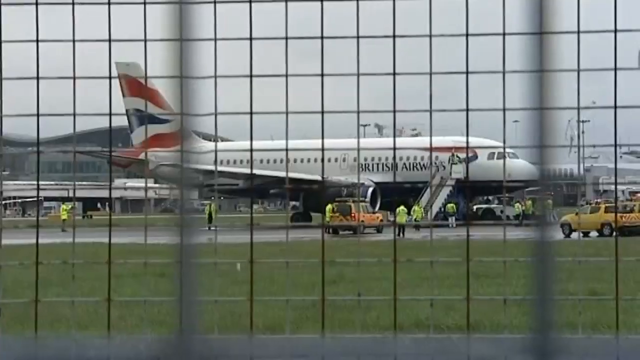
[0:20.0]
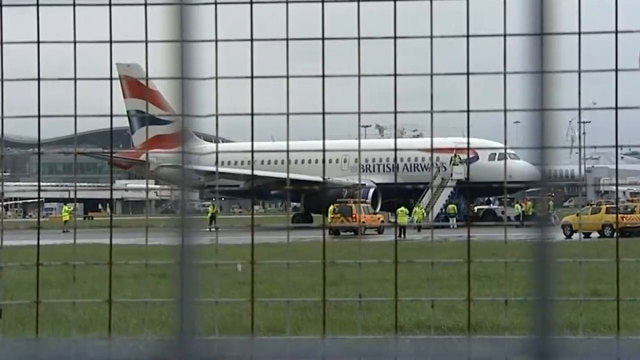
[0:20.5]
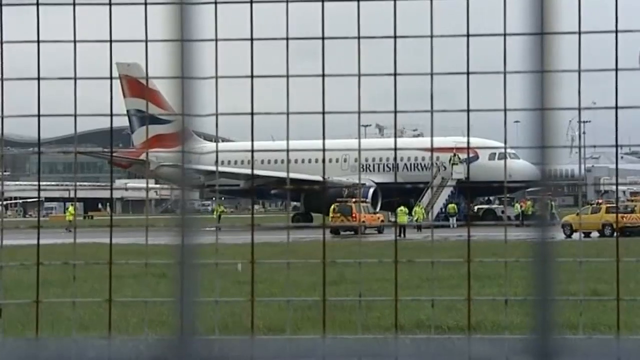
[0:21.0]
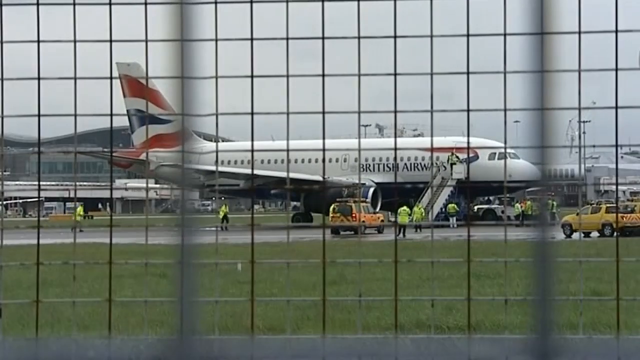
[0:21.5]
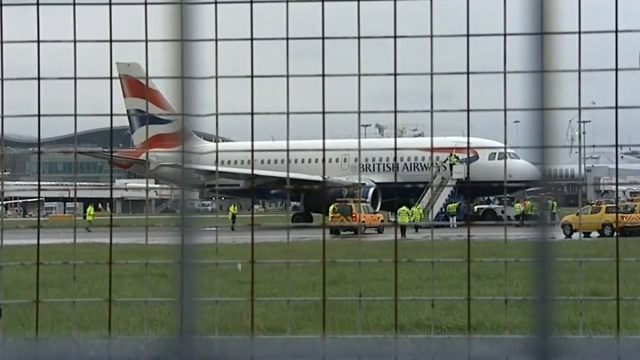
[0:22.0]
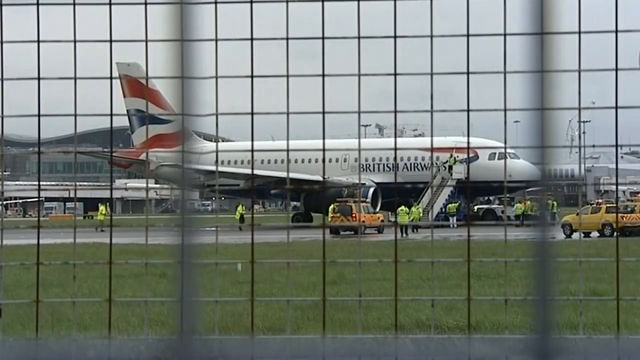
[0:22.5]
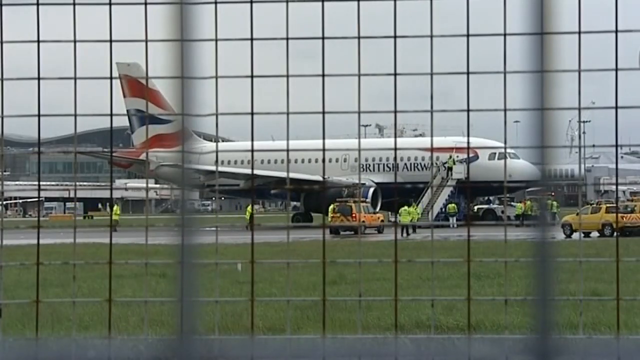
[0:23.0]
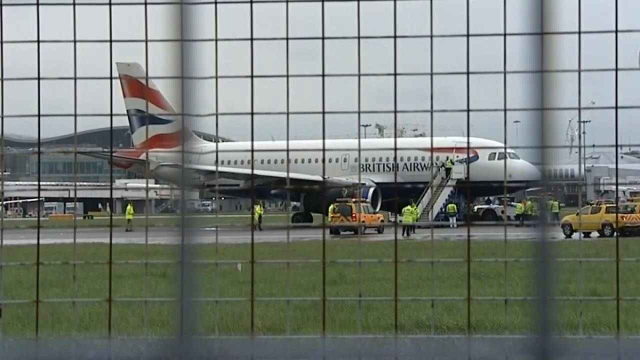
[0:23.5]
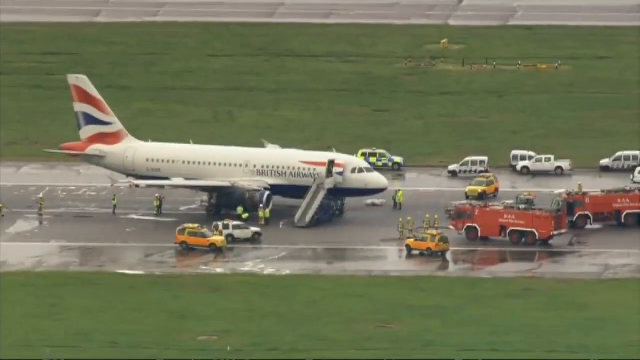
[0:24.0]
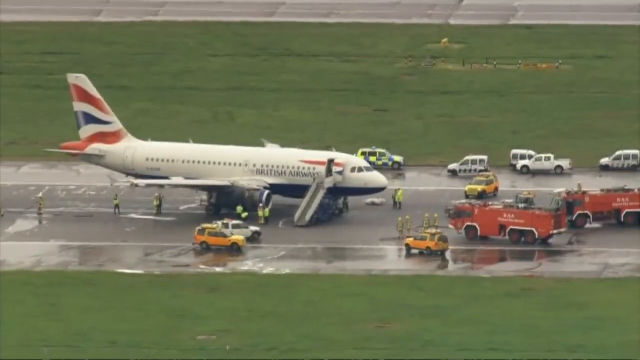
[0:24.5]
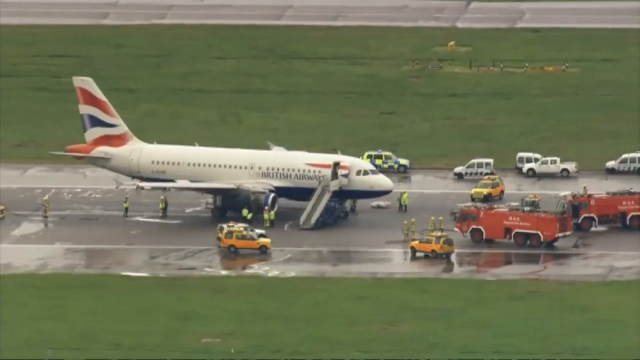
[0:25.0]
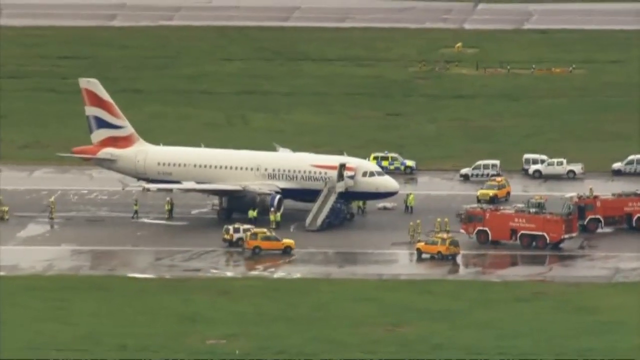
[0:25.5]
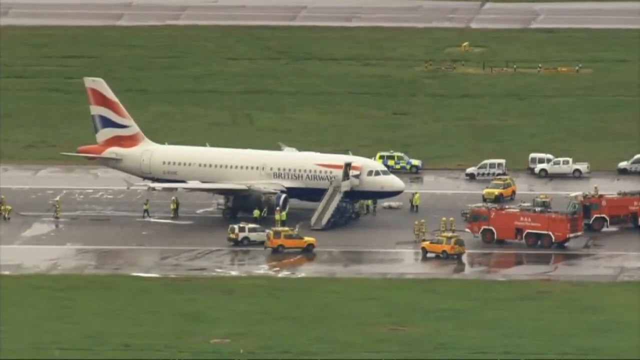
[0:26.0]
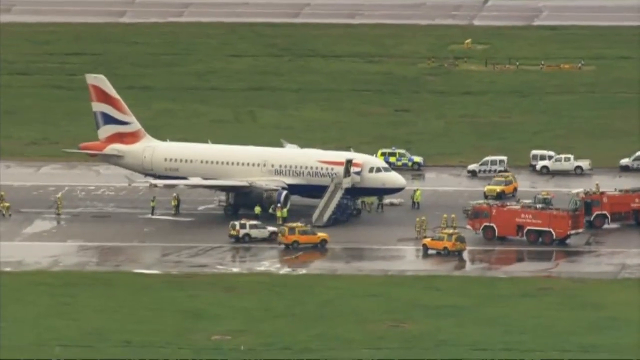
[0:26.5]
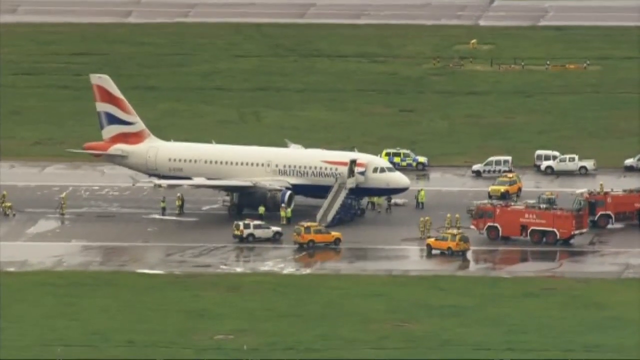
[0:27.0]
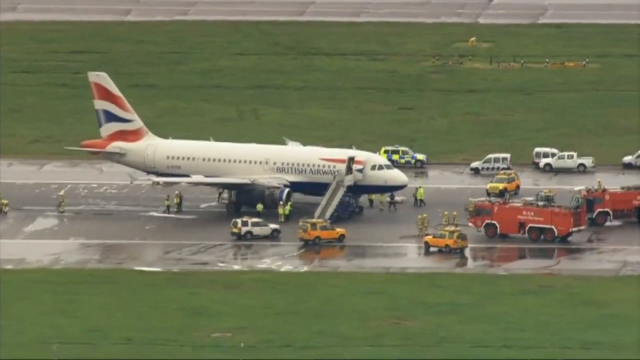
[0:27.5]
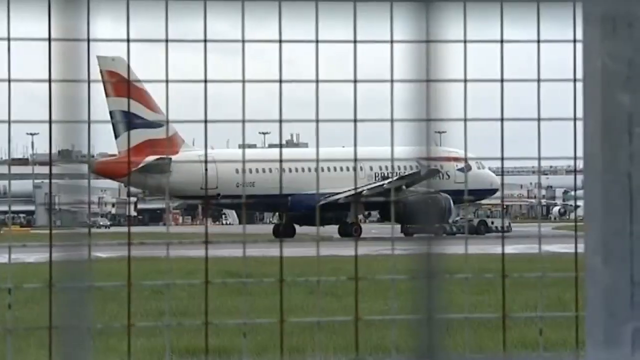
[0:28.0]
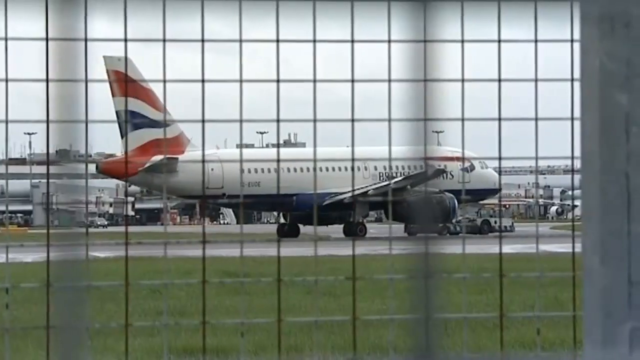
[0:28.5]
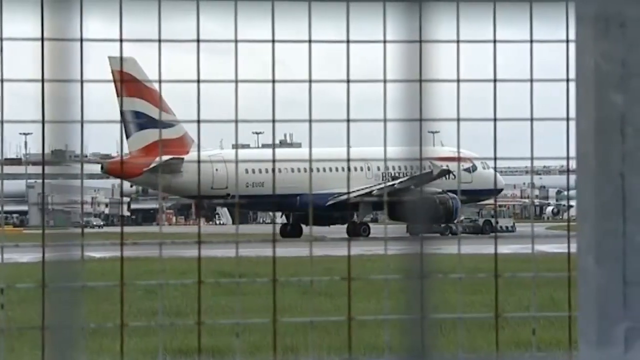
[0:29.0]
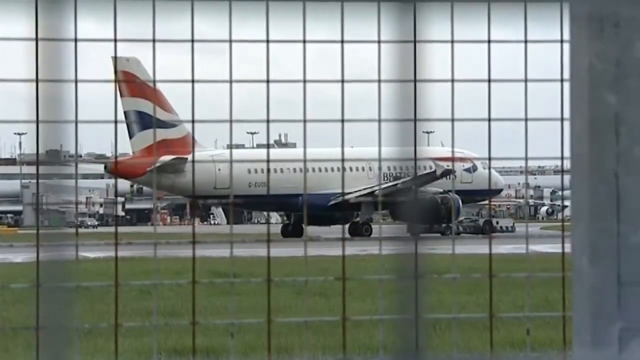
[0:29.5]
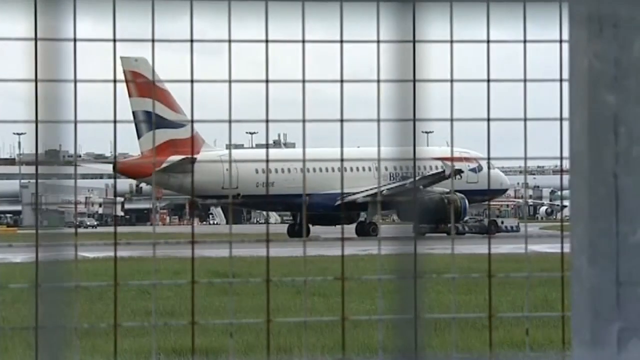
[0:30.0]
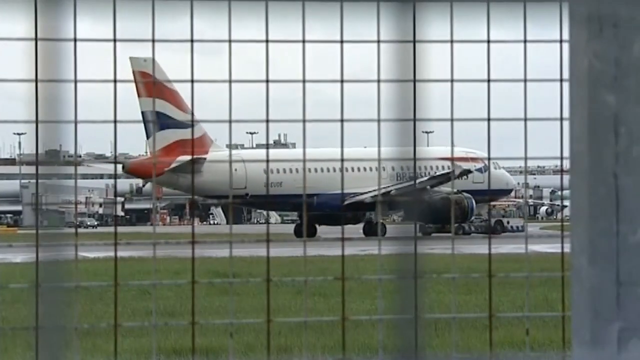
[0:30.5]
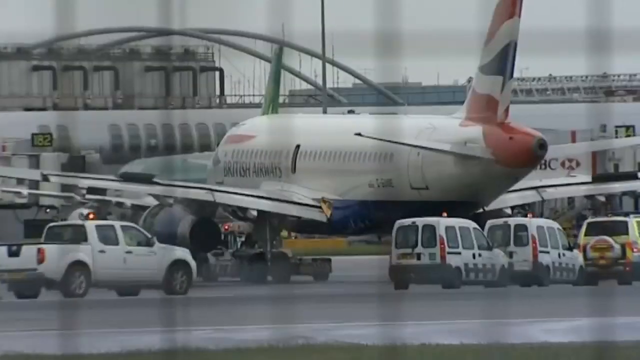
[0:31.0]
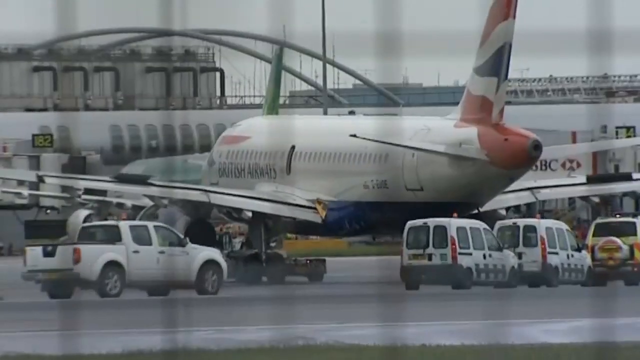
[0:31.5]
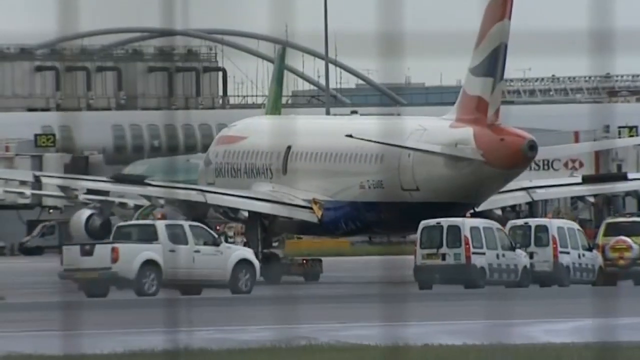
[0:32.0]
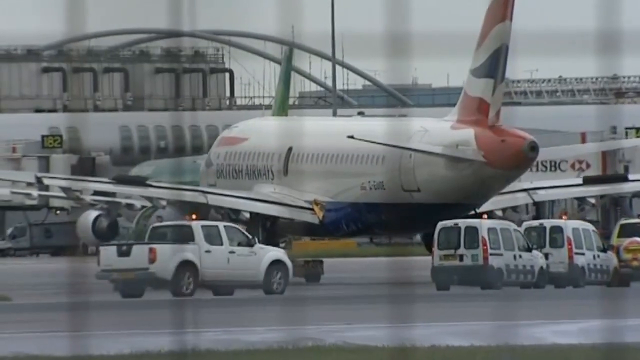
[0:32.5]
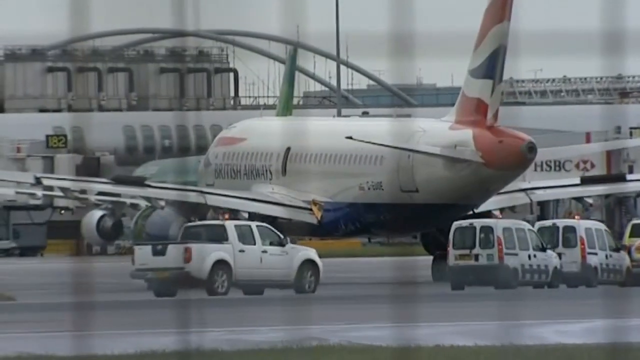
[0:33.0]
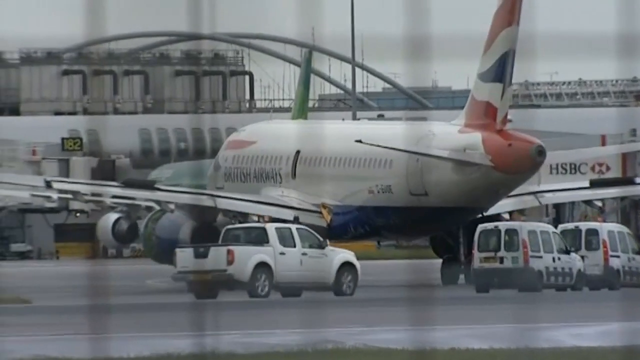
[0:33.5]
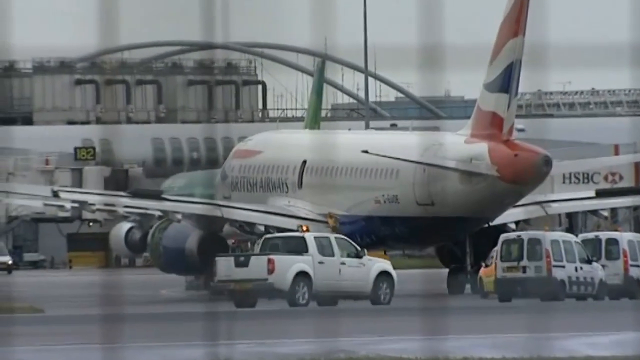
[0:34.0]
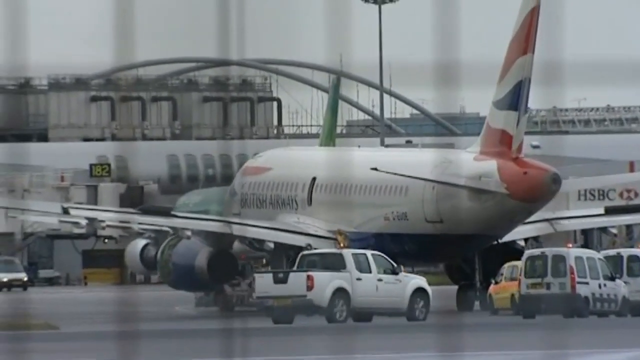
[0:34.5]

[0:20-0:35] More footage shows the British Airways plane being moved across the airport, seen from sort of a back view as well as a side view. At first it is filmed from a side view through a cage-like foreground, so much of the view is blocked off by a grid-like pattern. The airplane slowly cruises around and gets pulled in a certain direction.